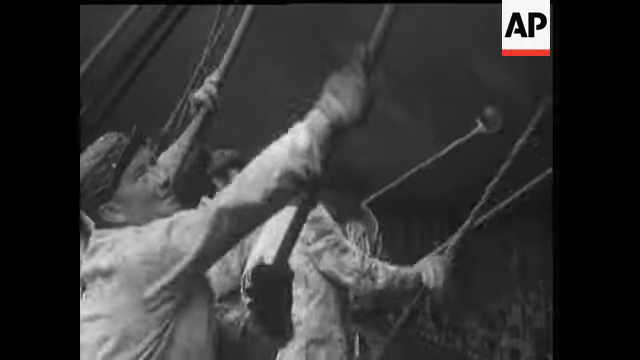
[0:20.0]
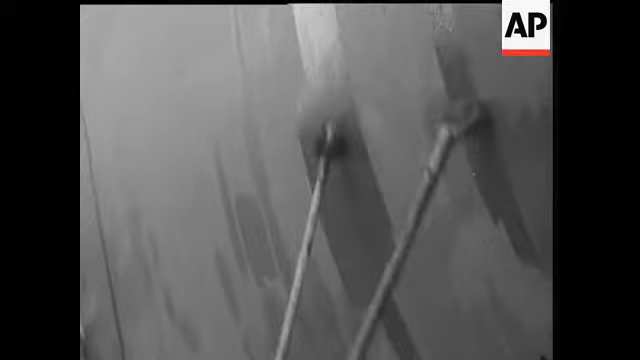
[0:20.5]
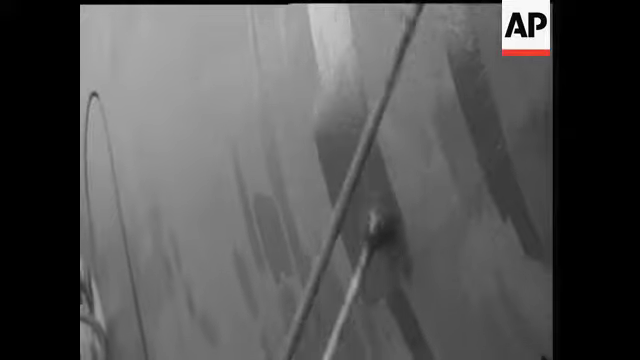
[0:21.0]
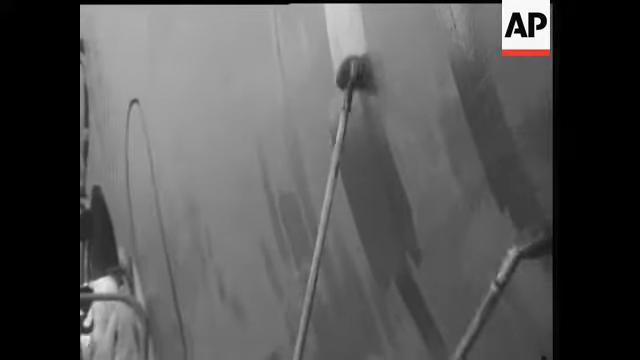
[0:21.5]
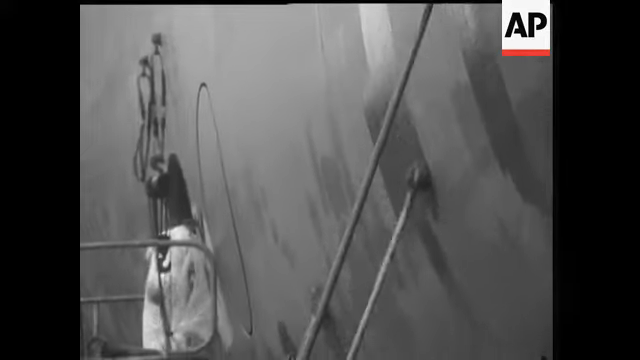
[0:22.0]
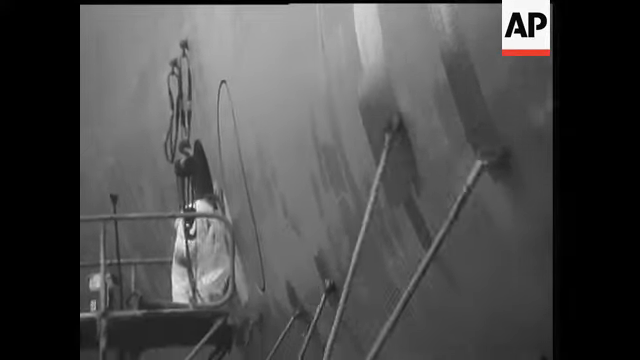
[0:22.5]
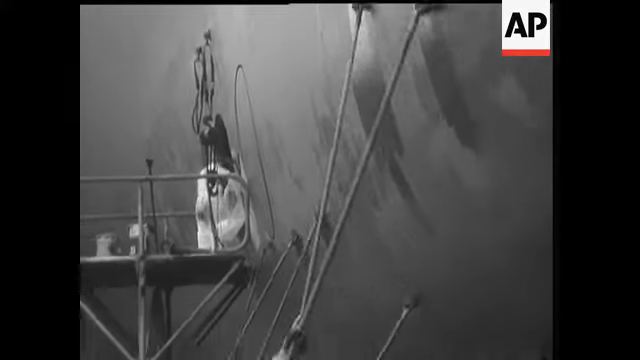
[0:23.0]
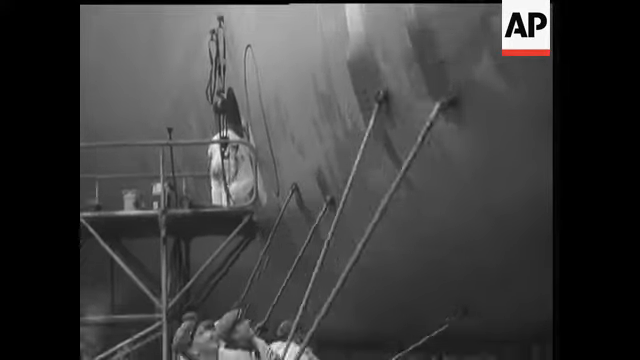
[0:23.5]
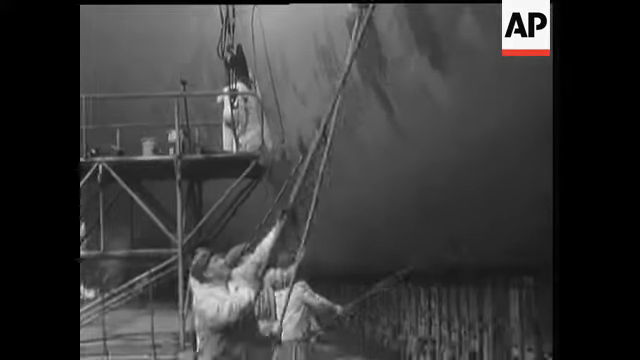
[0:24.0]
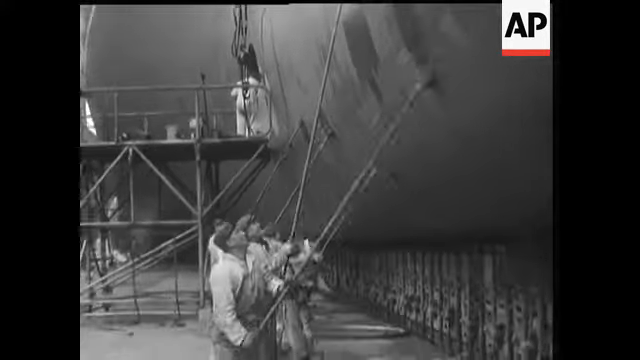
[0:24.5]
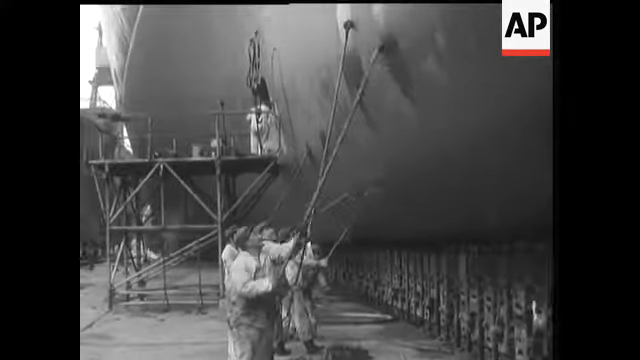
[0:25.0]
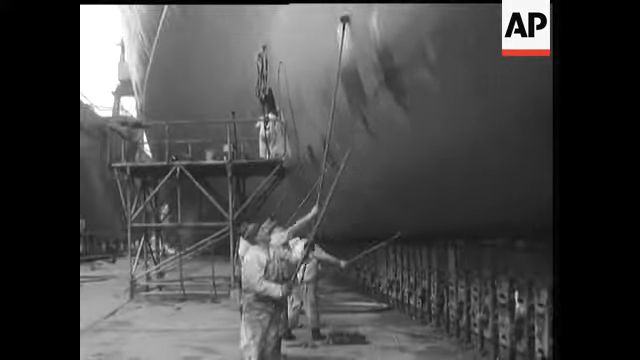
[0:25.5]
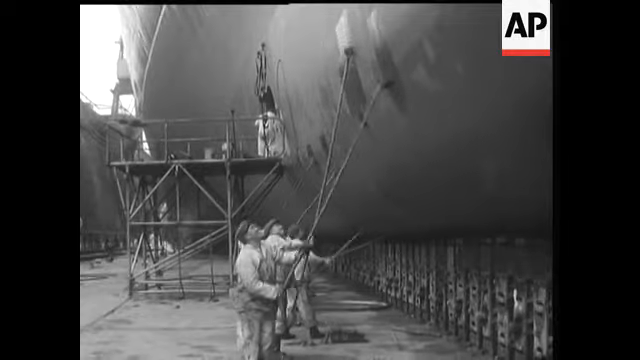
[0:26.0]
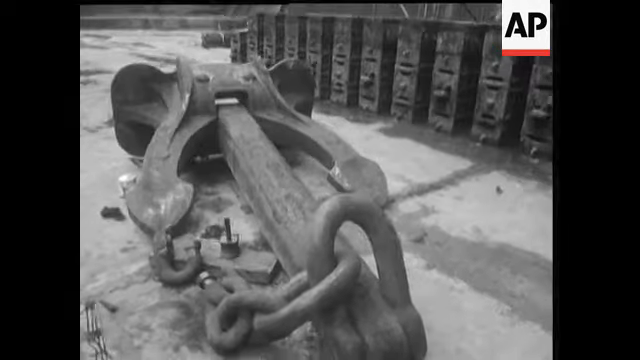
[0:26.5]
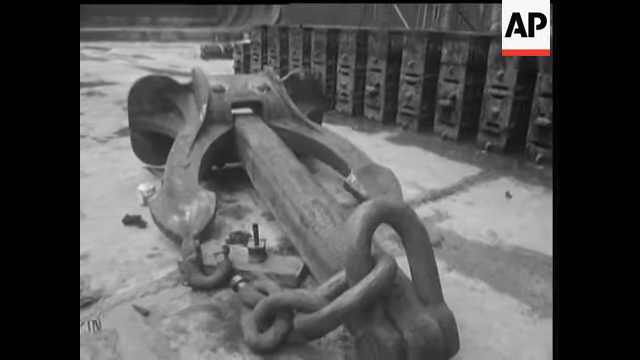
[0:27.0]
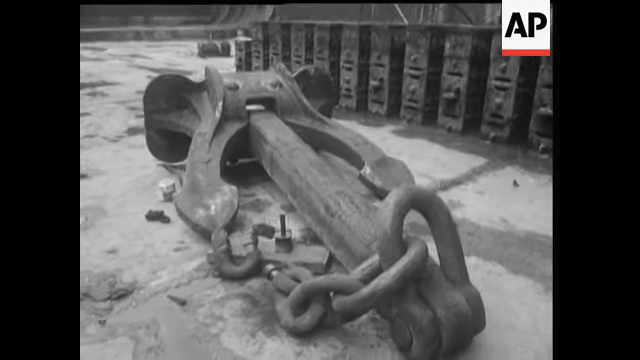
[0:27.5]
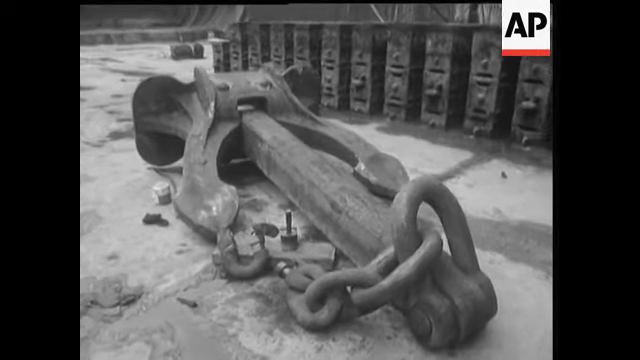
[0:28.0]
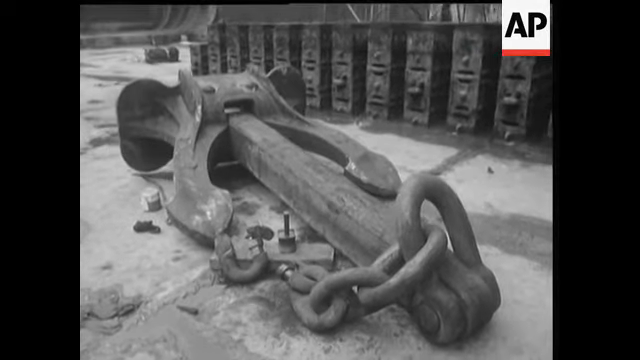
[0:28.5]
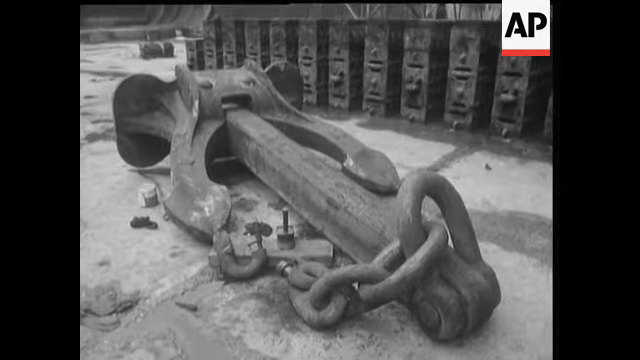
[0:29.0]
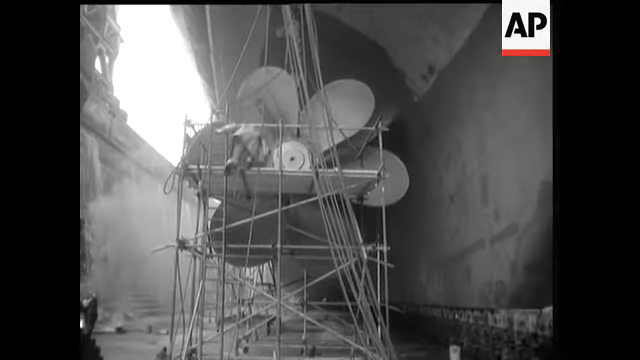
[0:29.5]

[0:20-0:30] Men in black and white, wearing flap caps, hold long-handled brushes and kind of brush and clean the side of the ship before it goes into the water. The view then moves to a close-up of a very large anchor lying on the concrete floor, and finishes with a close-up of a large fan, most likely the propeller at the rear of the ship.